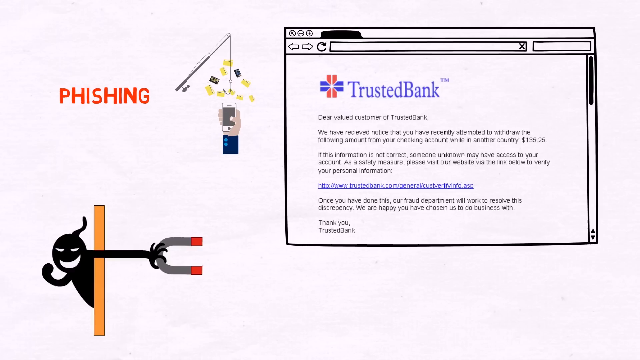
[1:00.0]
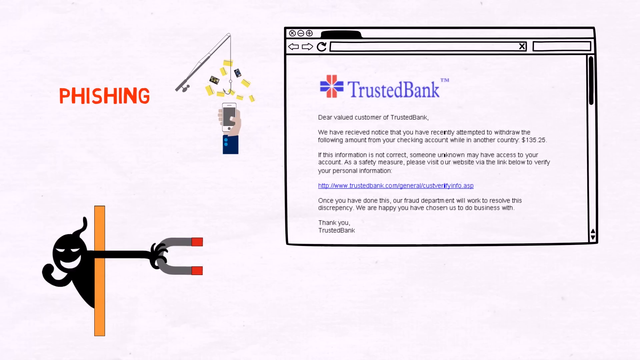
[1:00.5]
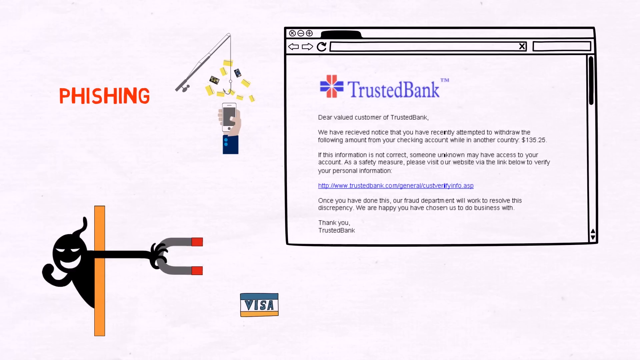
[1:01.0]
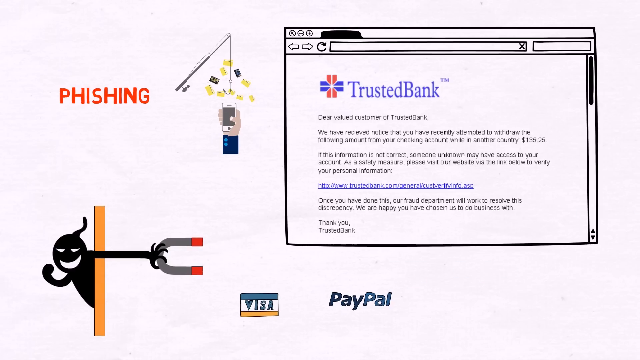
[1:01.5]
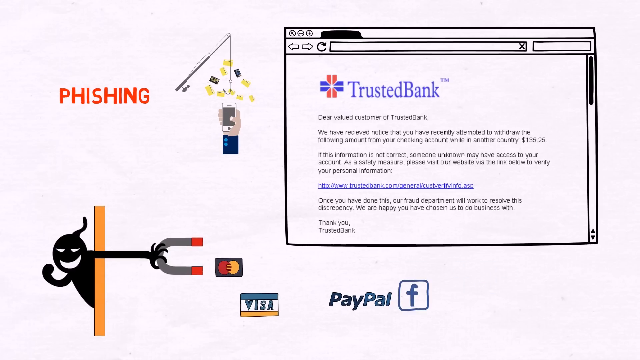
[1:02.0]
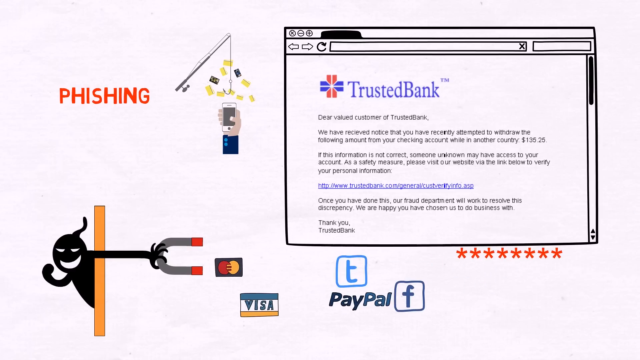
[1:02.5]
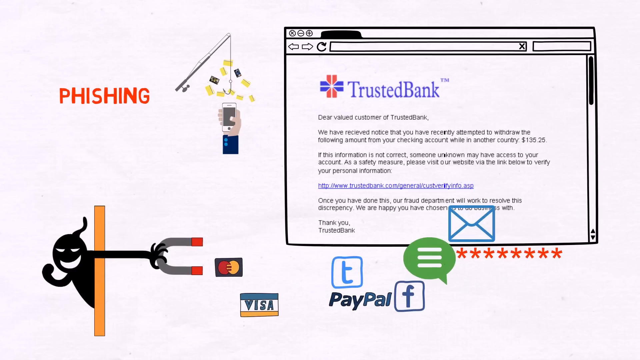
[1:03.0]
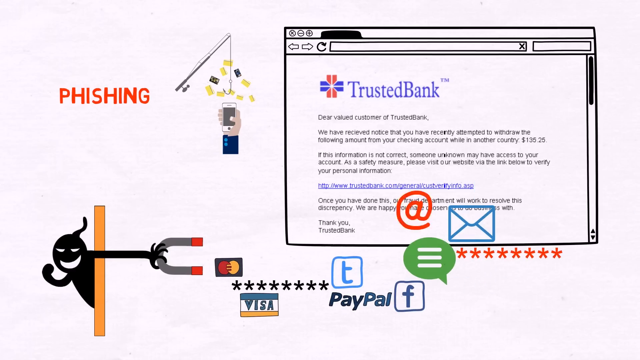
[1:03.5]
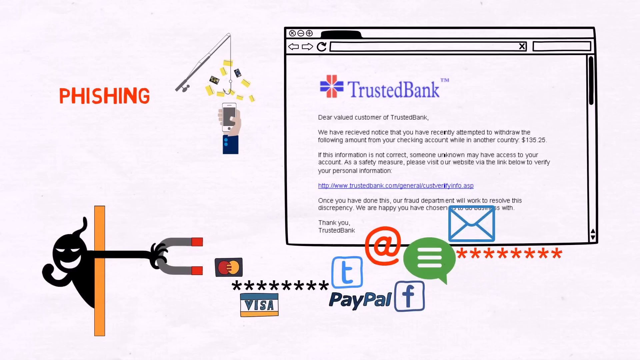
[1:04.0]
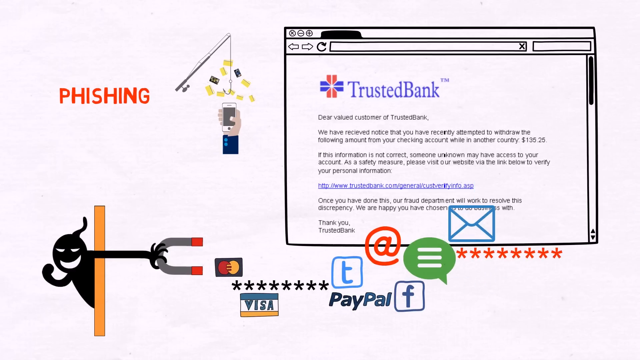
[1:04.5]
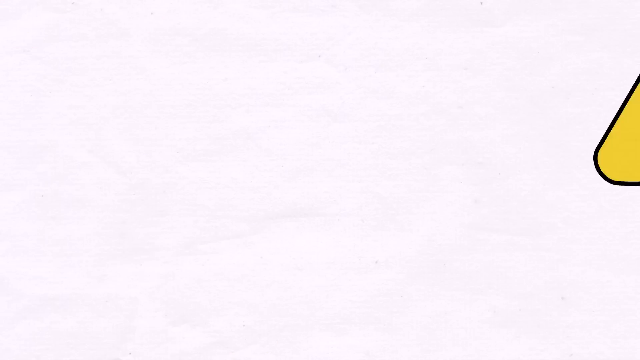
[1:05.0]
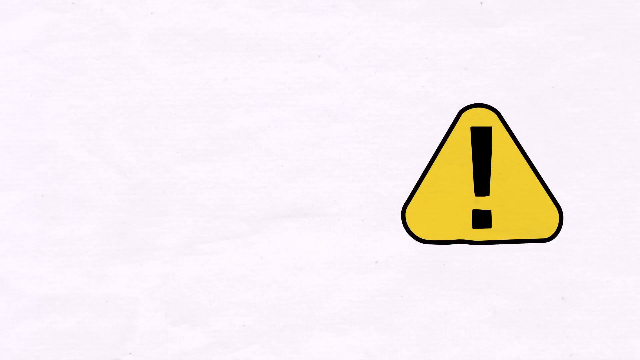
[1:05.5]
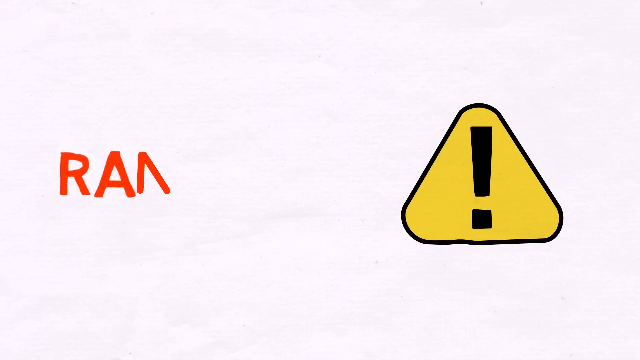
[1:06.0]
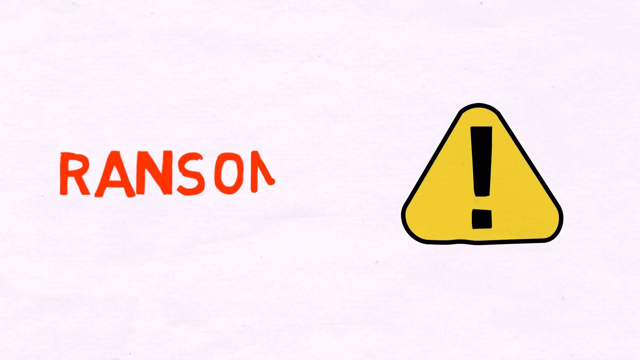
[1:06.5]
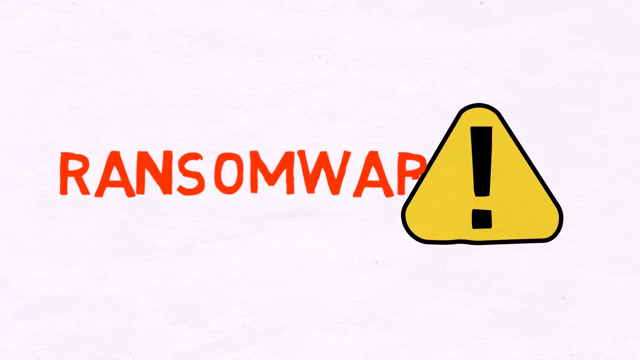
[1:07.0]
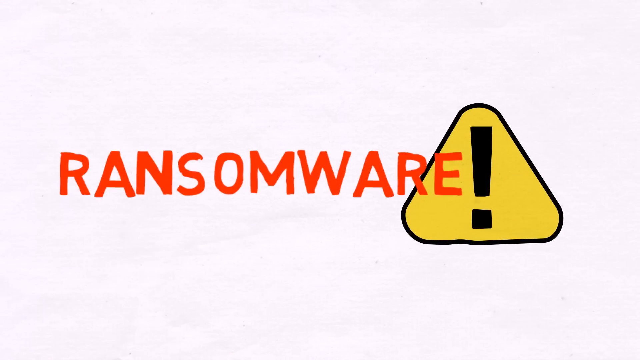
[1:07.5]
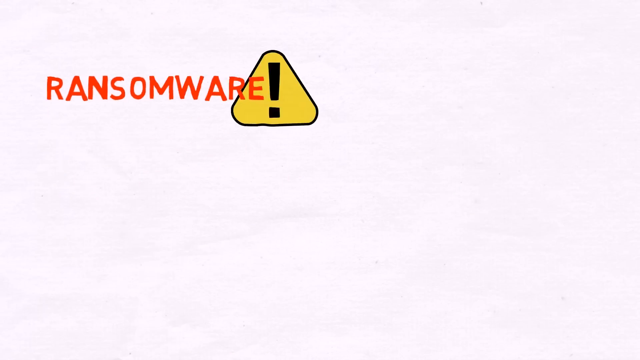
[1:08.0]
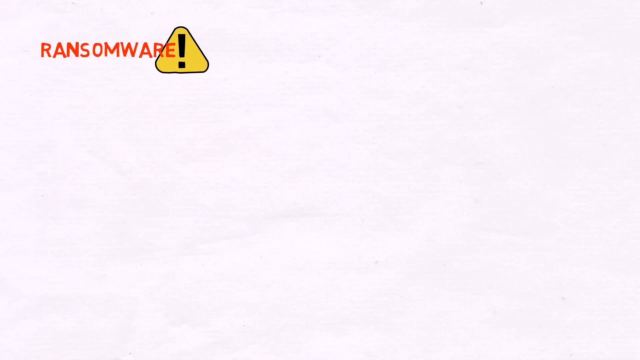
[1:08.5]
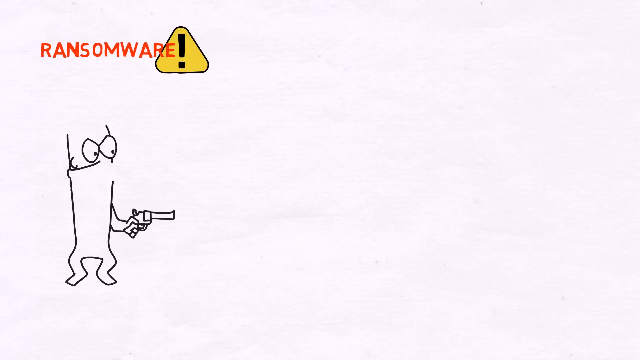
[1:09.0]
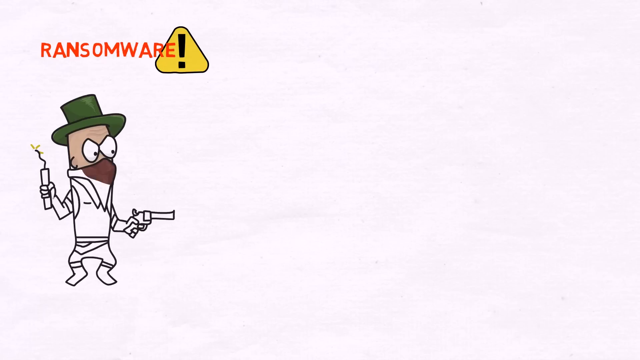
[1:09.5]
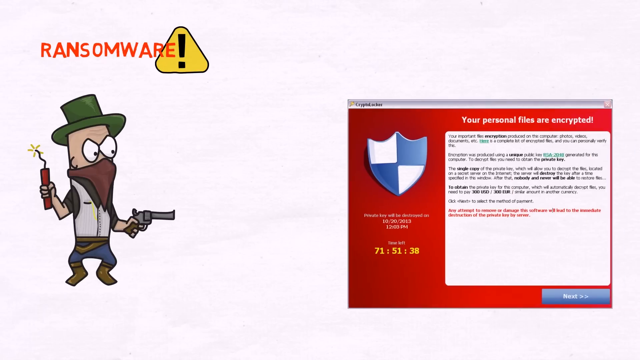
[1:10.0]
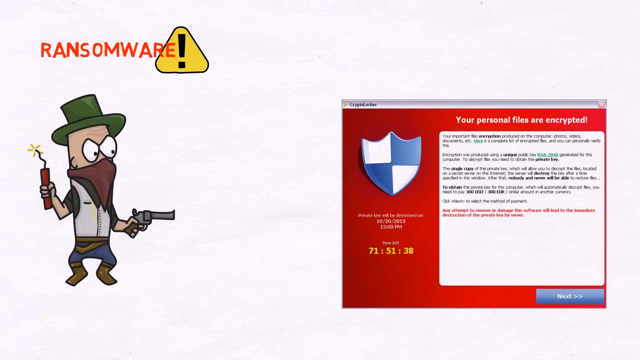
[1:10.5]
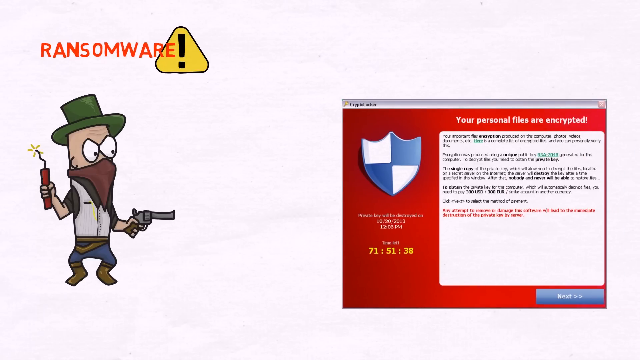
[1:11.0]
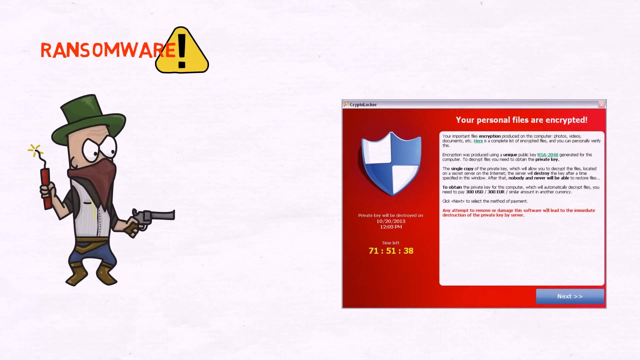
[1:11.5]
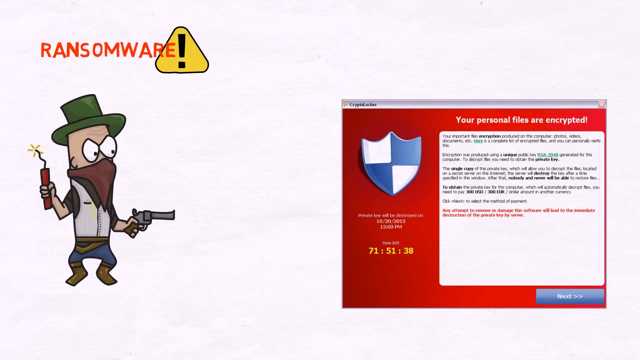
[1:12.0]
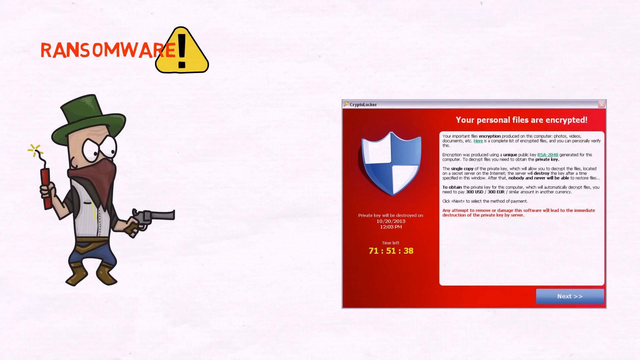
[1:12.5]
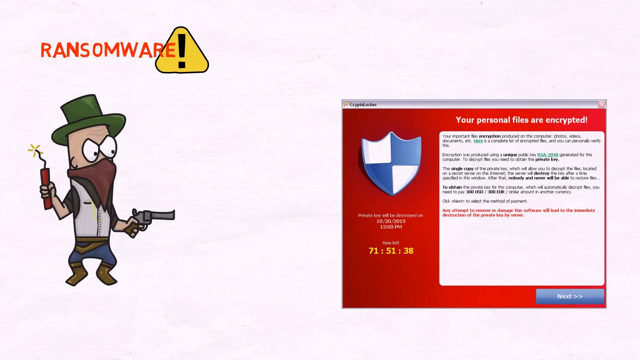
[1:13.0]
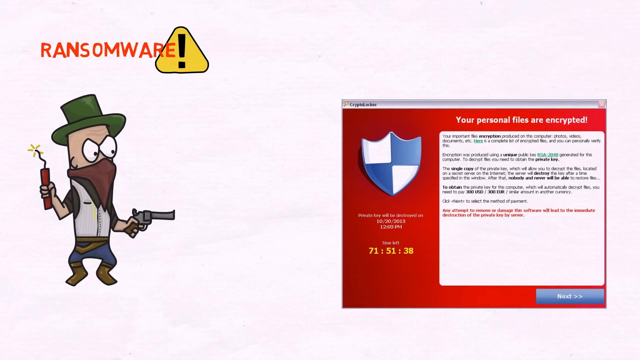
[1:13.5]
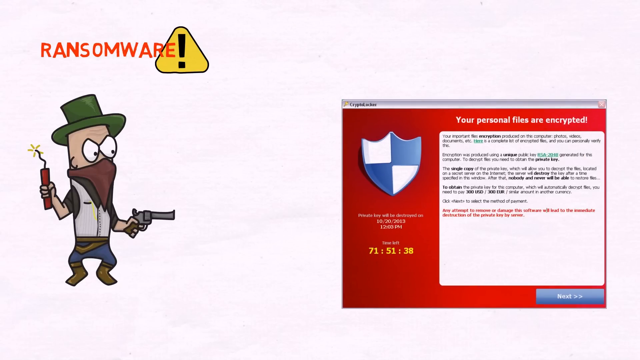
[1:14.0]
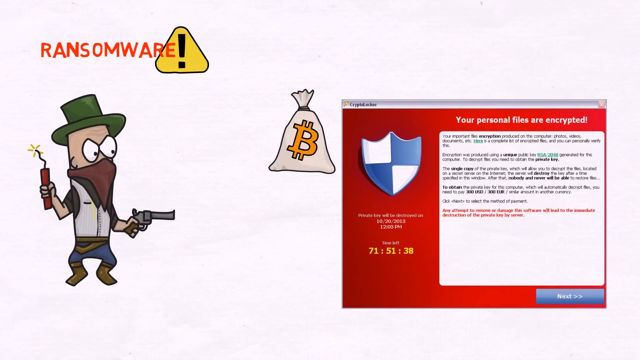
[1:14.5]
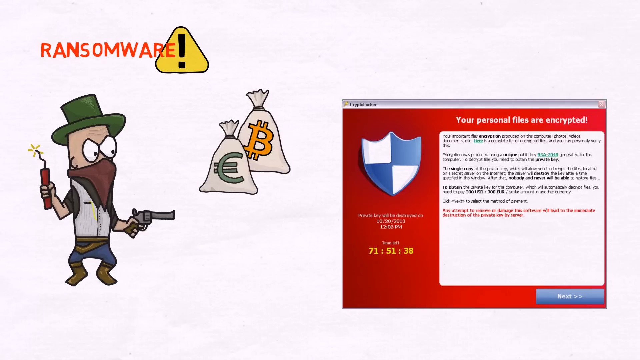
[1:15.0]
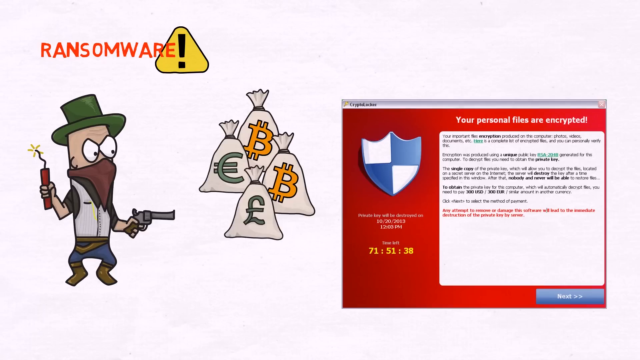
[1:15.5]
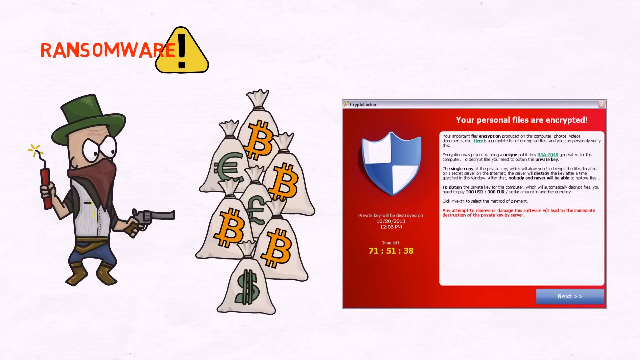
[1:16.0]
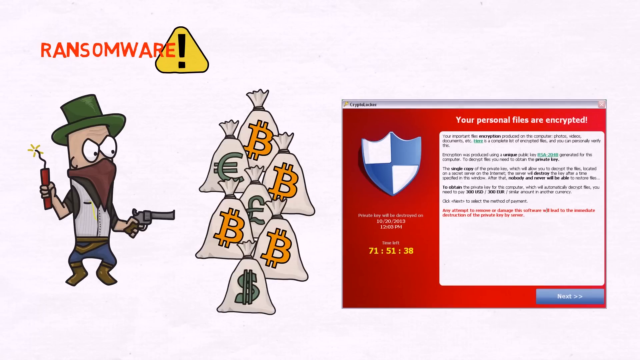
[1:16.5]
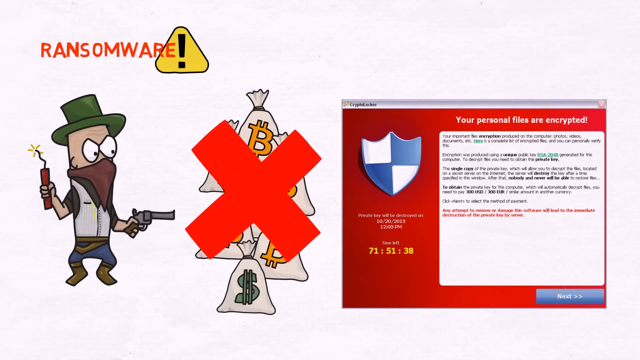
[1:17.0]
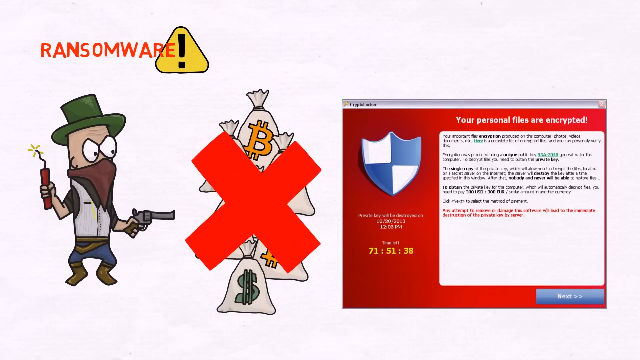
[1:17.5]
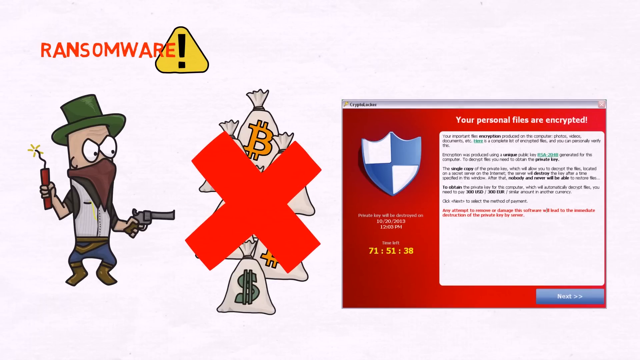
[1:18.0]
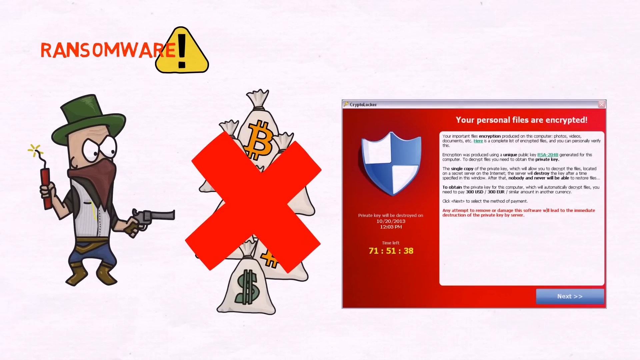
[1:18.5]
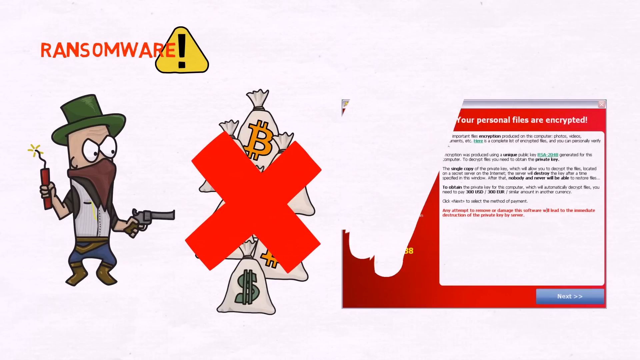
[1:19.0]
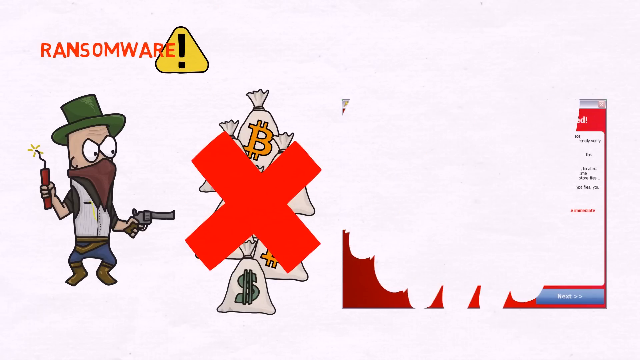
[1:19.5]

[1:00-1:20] On a white screen, the basic black malevolent figure is in the bottom left corner, his hand pointing out with fingers and thumb wrapped around a grey magnet with red blocks of colour on both points. The magnet is aimed at a credit card with a black background and a red circle adjoining a yellow circle, possibly a MasterCard symbol. Below it, slightly lower and to the right, is another credit-card shape with the text "visa" below a green or blue bar and above a yellow bar, and to the right of that is the text "paypal". In the top left, above the figure, is "phishing" in red text, and to its right a basic drawing of a fishing rod with the line running down from the tip to a hook, with various card-type shapes below that suggest it is trying to hook the cards or notes. Below that, a cartoon hand reaches up, apparently in a suit, with a double button on the collar; the bottom of the sleeve is blue and the buttons are light blue. The fingers are on the far side of a mobile phone and the thumb holds its screen; the phone has a white surround and a blank grey screen. Next to it is a depiction of a computer screen with bars at the top, showing a logo for Trusted Bank and the text "Dear Valued Customer of Trusted Bank, Trusted Bank", then on a new line "We have received notice that you have recently attempted to withdraw the following amount from your checking account while in another country. $135.25." A new paragraph reads "If this information is not correct, someone unknown may have access to your account. As a safety measure, please visit our website via the link below to verify your personal information." Below is a link in blue font, followed by "once you have done this, our fraud department will work to resolve this discrepancy. We are happy you have chosen us to do business with. Thank you, Trusted Bank." Around the PayPal symbol at the bottom appear an F that looks like Facebook, a T in a blue square with a white background that may indicate Twitter, a red A with a line around it suggesting an at sign, and a green chat bubble with three horizontal lines, which just overlaps the Trusted Bank screen. At the bottom of the Trusted Bank screen is an envelope with a white background, a blue outline and blue triangles at top and bottom that look like an envelope seal. Another screen follows, where "ransomware" appears in red from left to right, ending with a yellow triangle with a black border and a black exclamation mark inside.